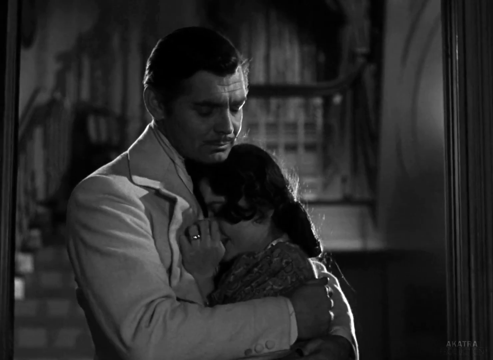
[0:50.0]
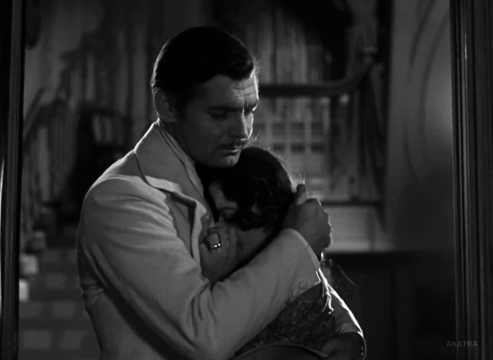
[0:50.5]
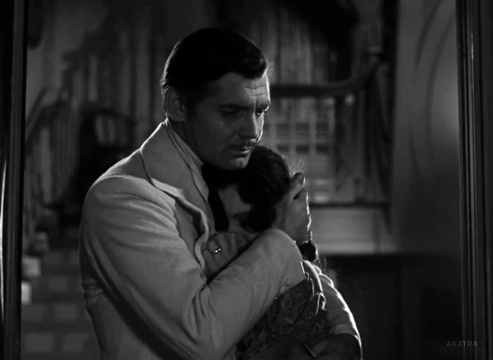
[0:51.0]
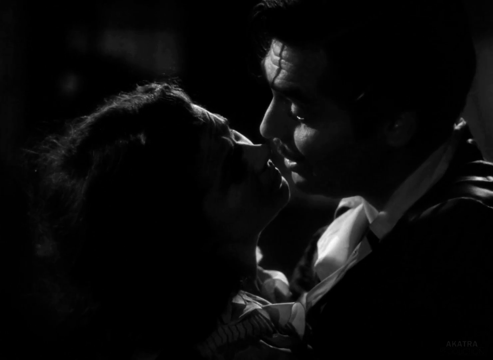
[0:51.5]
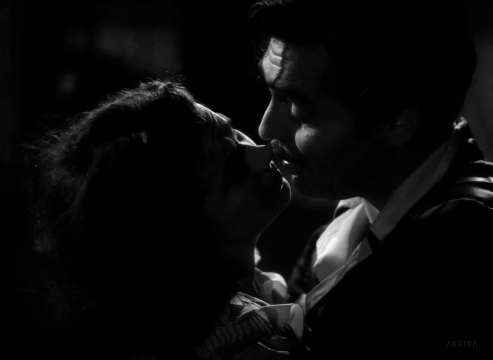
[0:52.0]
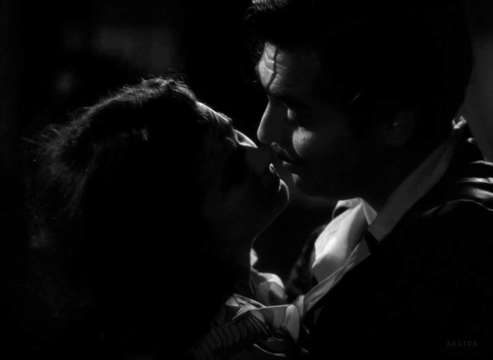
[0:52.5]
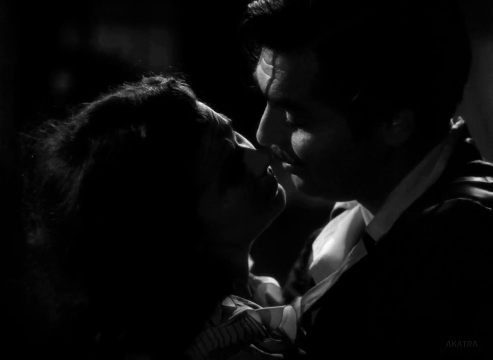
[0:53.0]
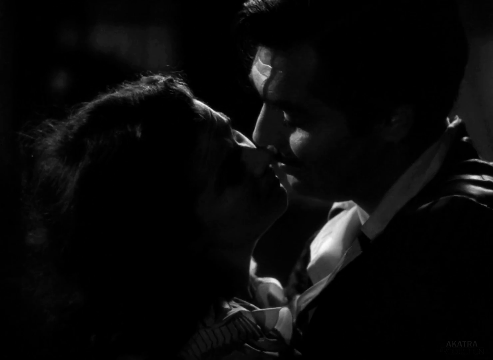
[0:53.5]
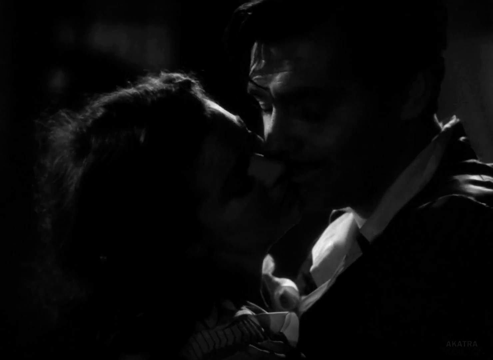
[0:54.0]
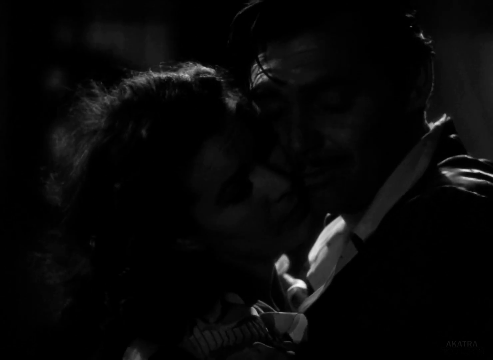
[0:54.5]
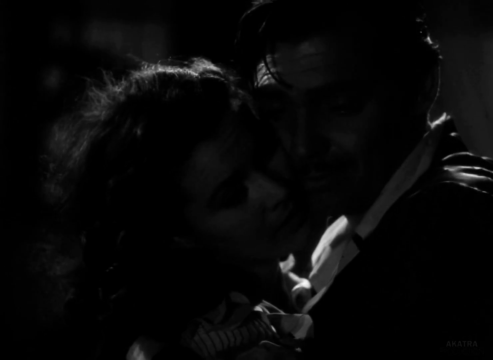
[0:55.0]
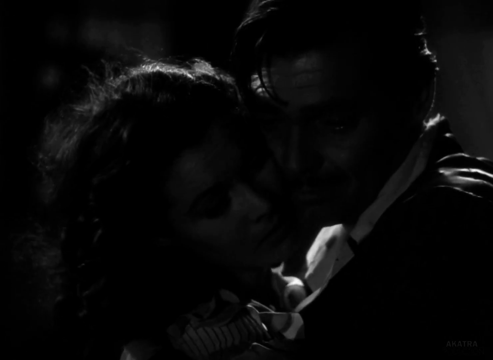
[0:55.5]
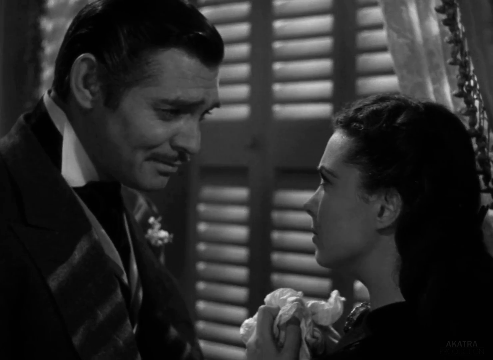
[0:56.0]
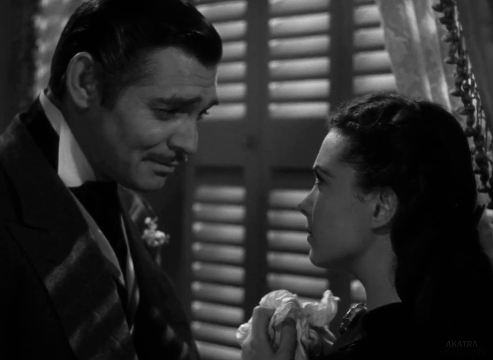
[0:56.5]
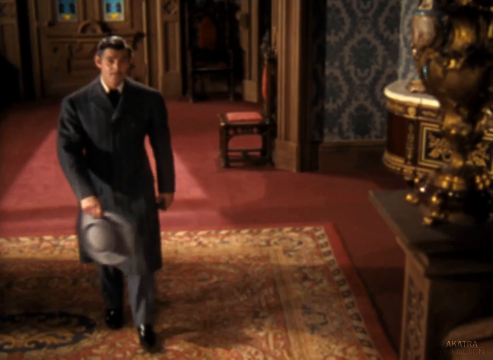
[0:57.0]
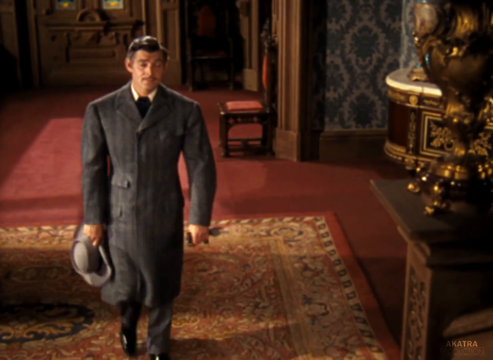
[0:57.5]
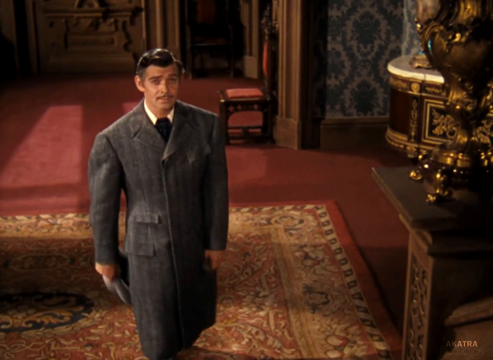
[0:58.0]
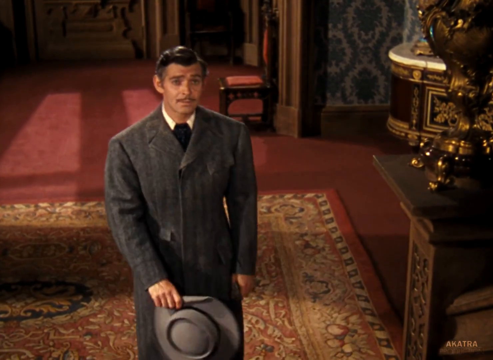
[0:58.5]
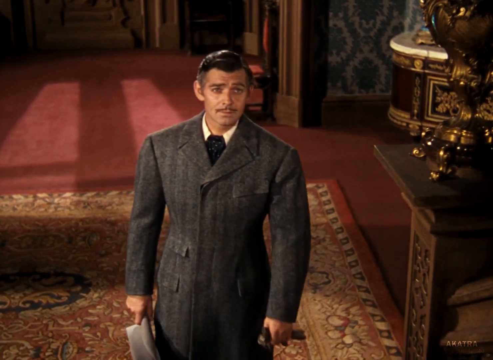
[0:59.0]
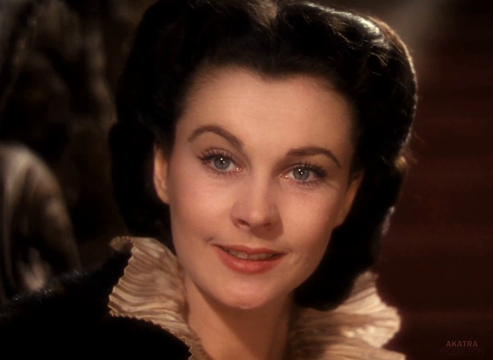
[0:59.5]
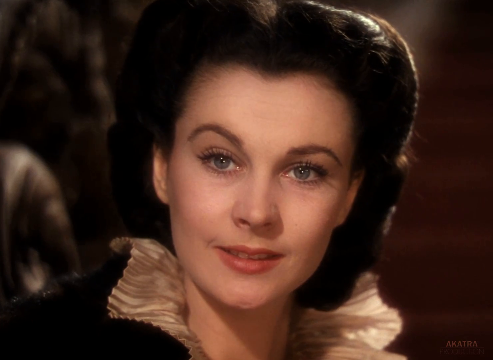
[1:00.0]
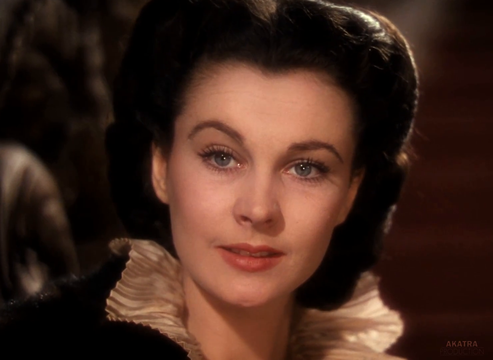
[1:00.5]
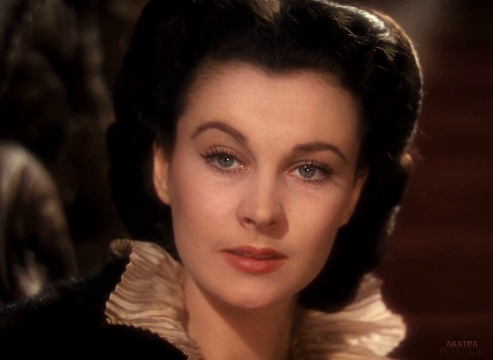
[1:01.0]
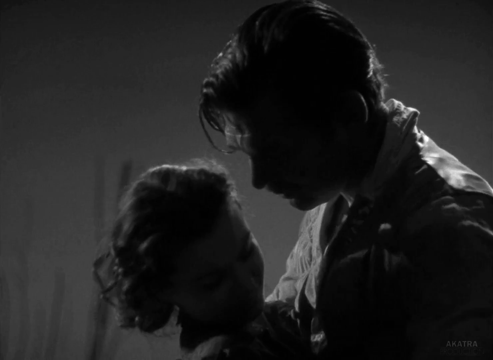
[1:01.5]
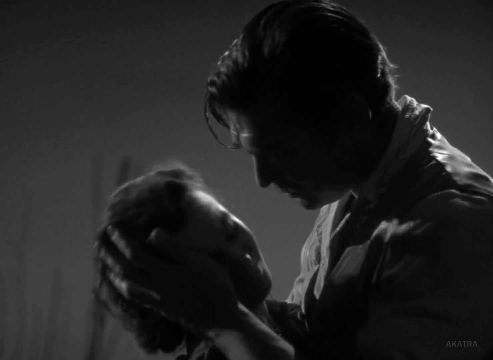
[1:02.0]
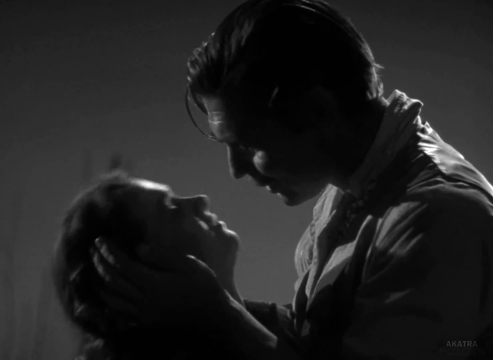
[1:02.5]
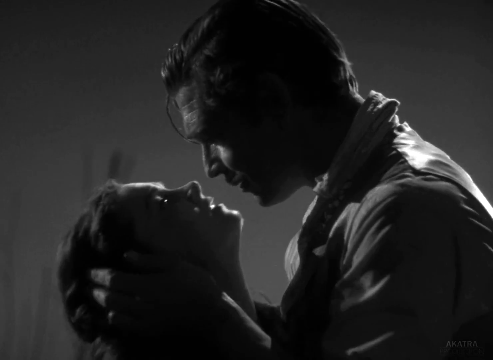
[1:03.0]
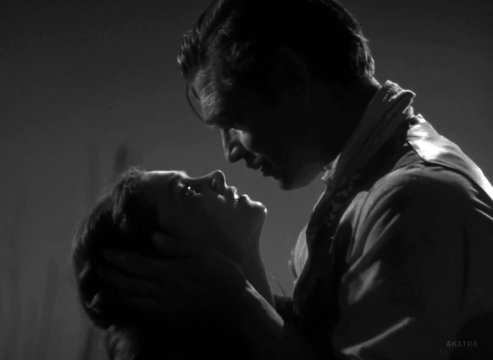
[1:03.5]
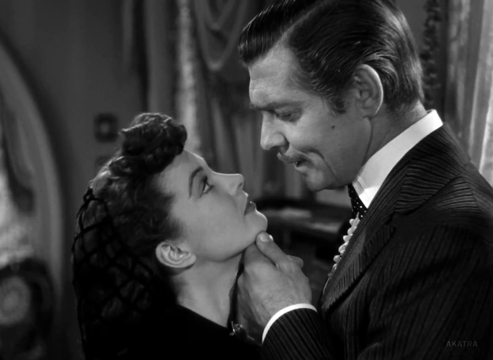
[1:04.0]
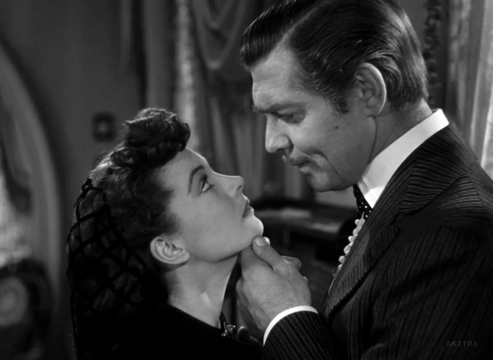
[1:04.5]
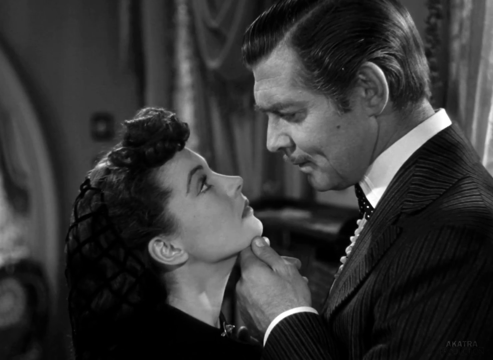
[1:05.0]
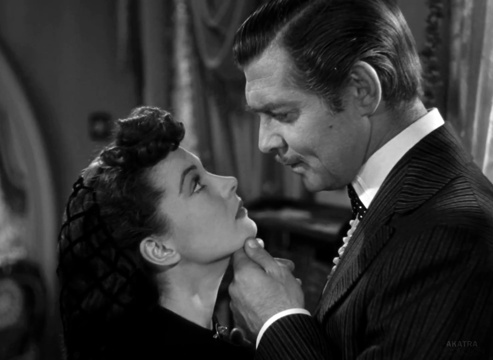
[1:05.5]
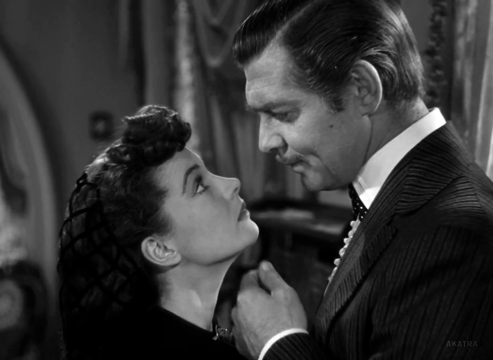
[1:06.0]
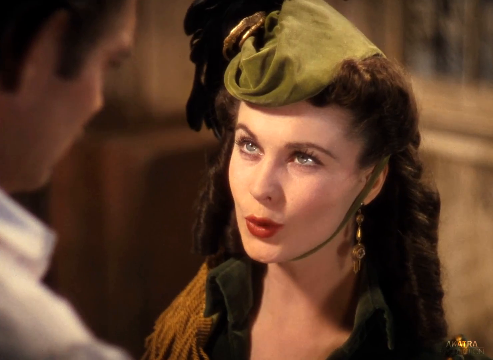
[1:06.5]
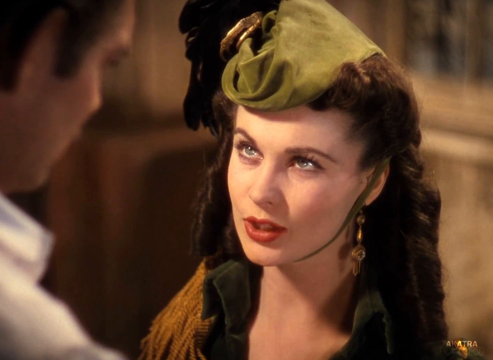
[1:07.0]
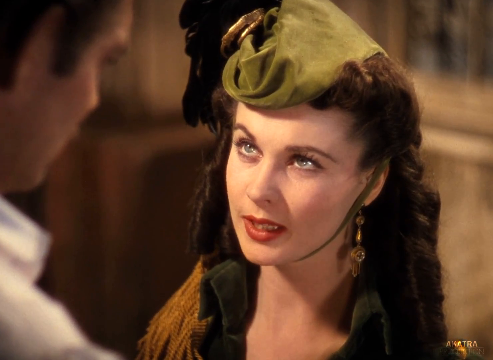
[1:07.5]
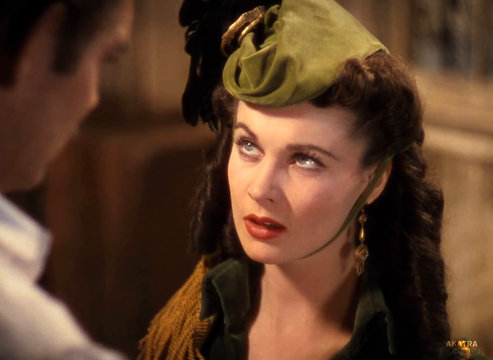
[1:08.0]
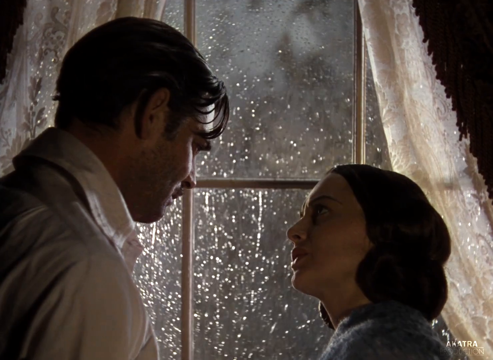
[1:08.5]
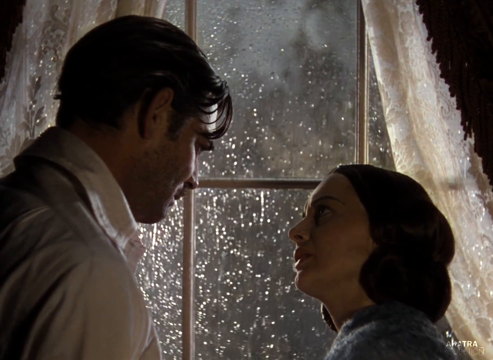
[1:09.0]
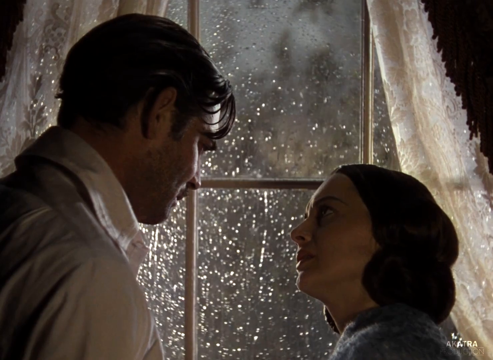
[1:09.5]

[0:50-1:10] The couple continues to kiss and stay very close. The man then walks in from what seems to be the entrance of the building, holding his hat in his right hand; it looks like a sort of rounded gray hat, and he wears a sort of dark gray robe. He looks at a lady with black hair. Close-up footage shows the two looking romantically at each other. Near the end, they hold each other in front of a window with a lot of rain coming in.